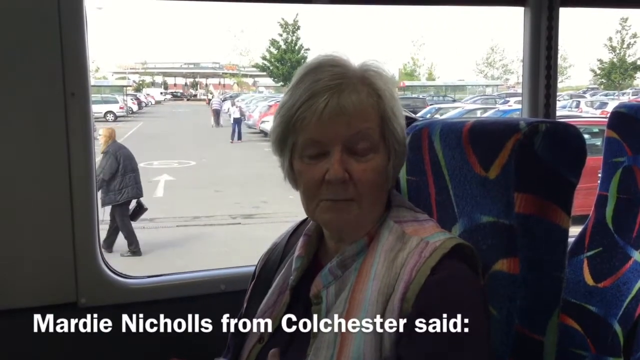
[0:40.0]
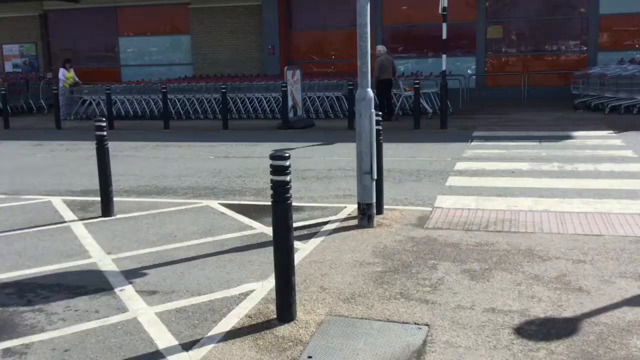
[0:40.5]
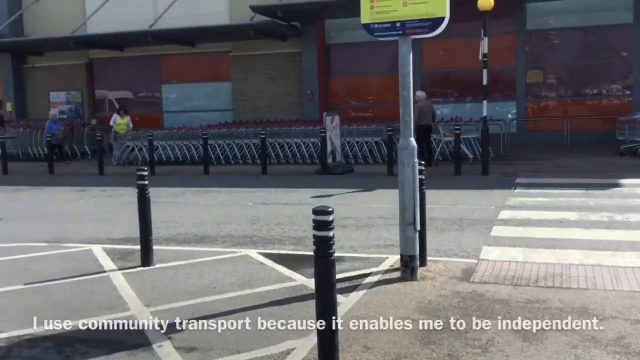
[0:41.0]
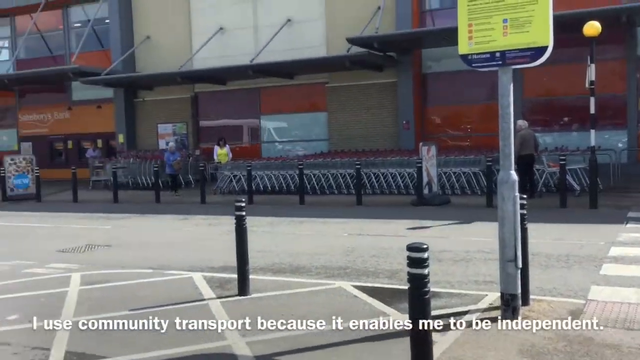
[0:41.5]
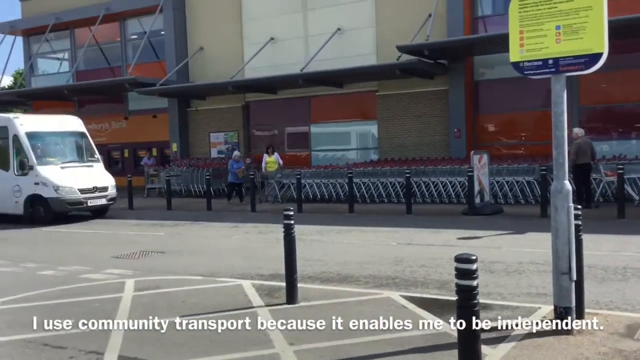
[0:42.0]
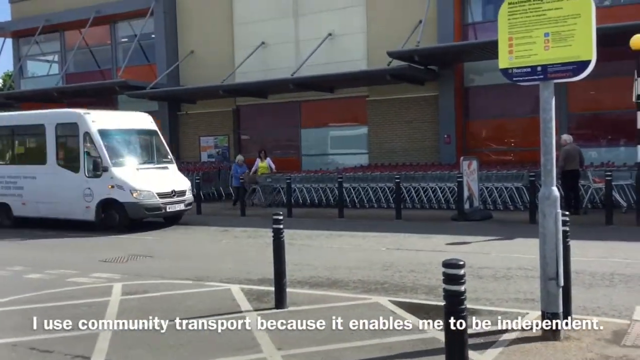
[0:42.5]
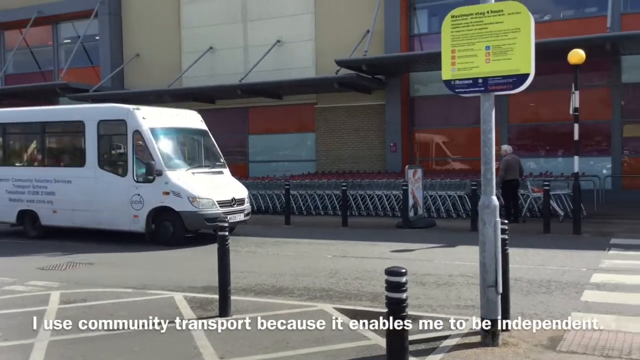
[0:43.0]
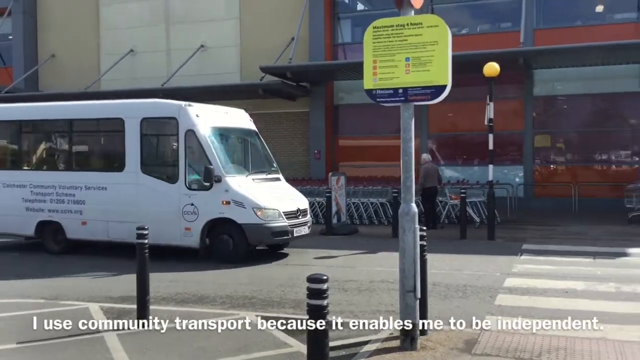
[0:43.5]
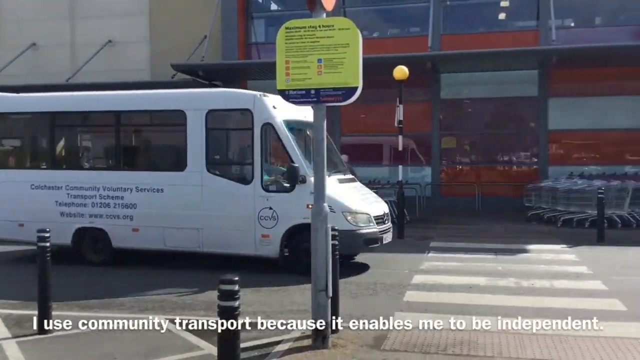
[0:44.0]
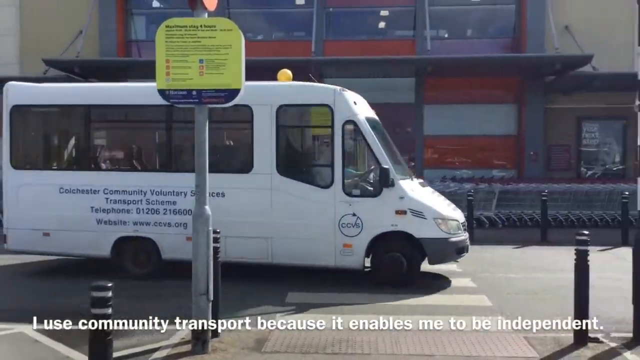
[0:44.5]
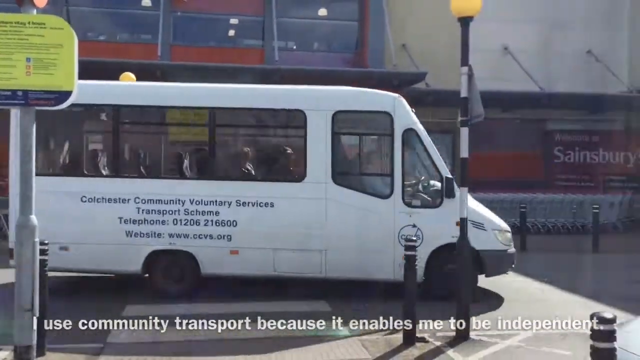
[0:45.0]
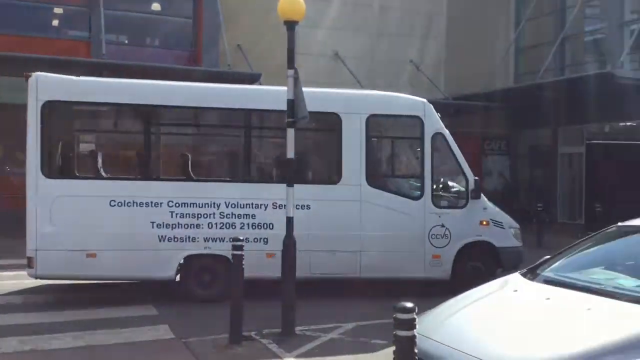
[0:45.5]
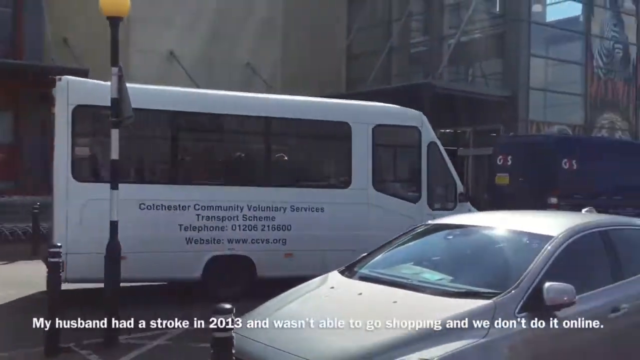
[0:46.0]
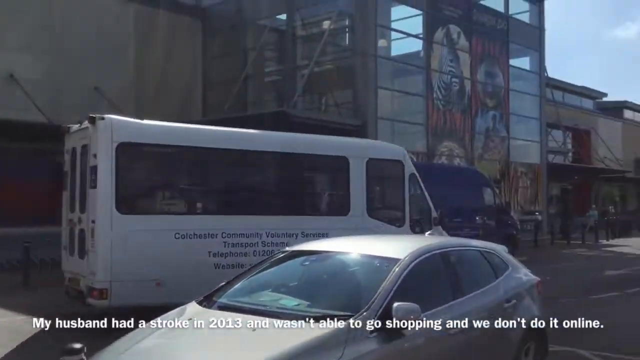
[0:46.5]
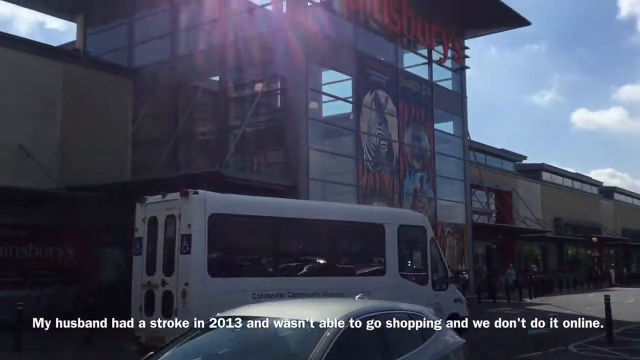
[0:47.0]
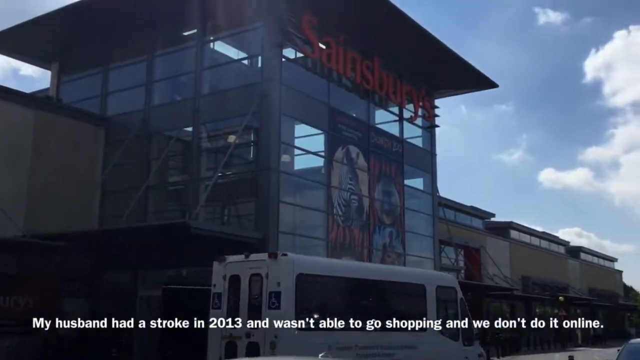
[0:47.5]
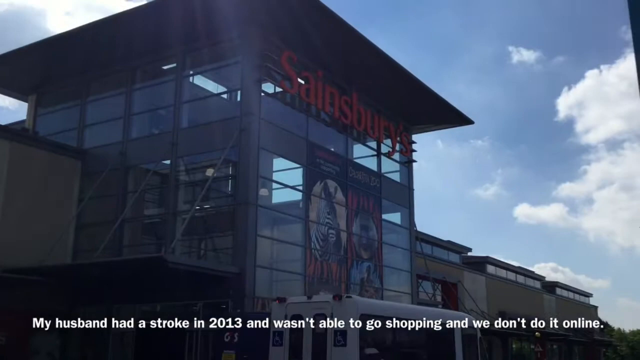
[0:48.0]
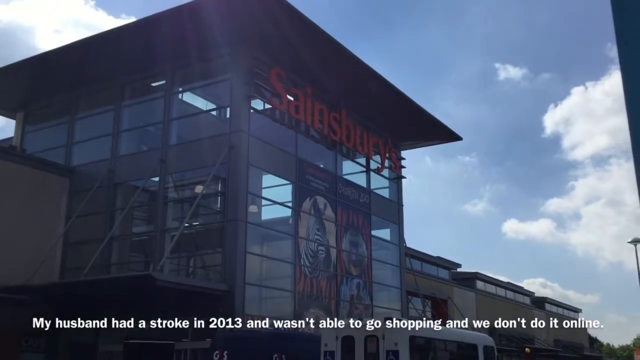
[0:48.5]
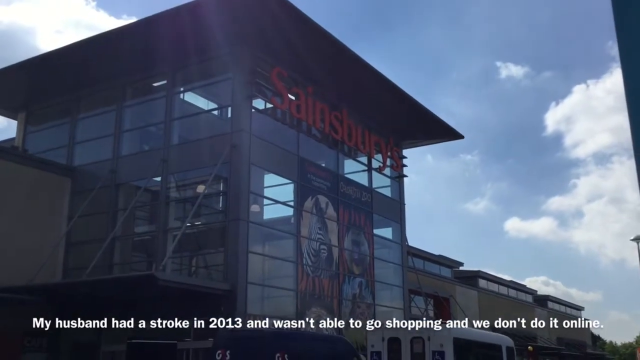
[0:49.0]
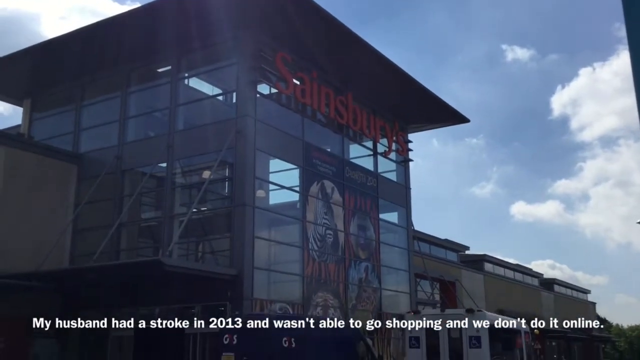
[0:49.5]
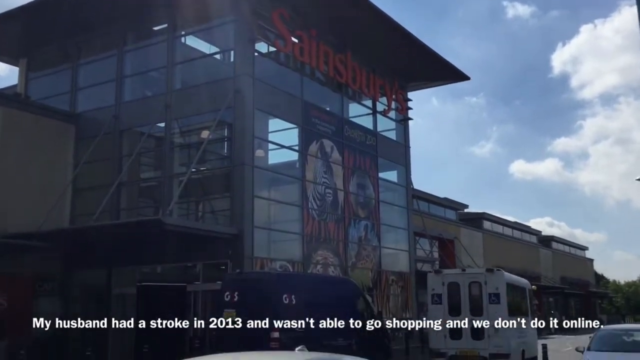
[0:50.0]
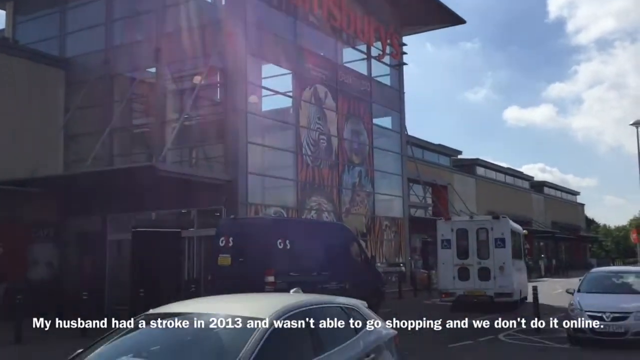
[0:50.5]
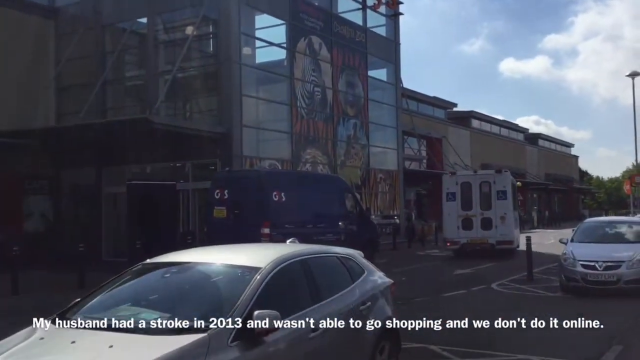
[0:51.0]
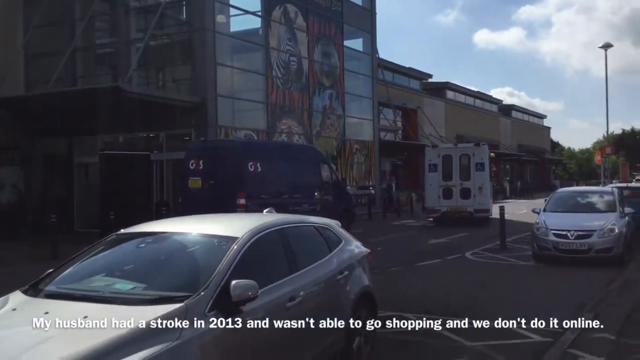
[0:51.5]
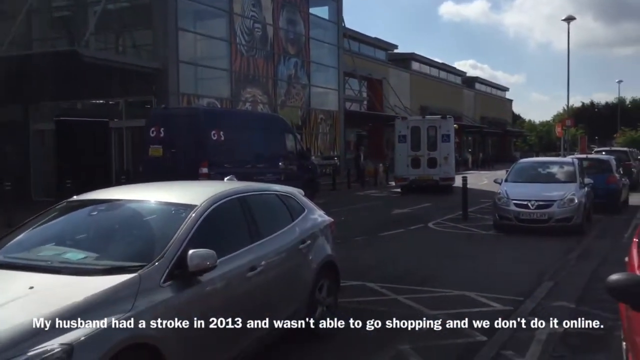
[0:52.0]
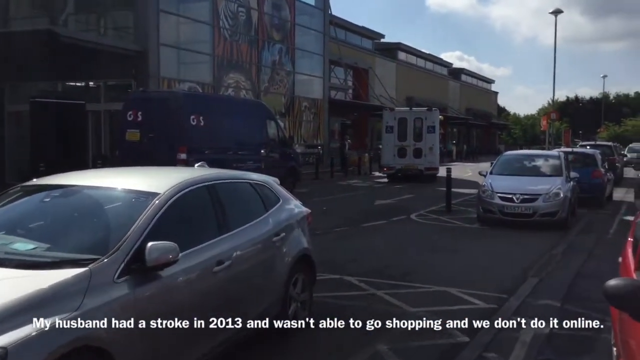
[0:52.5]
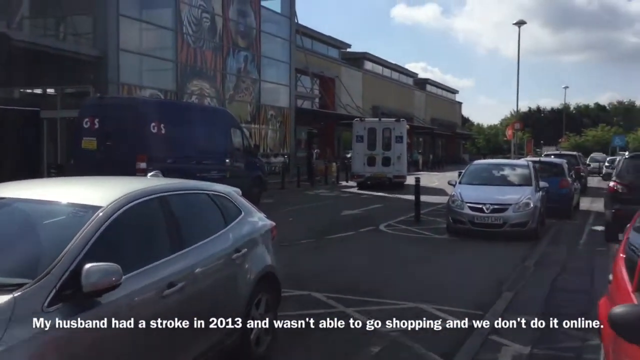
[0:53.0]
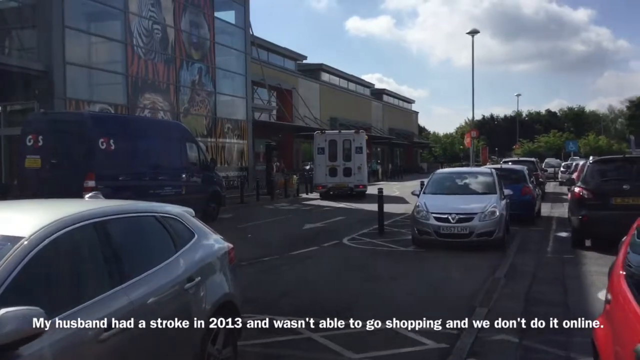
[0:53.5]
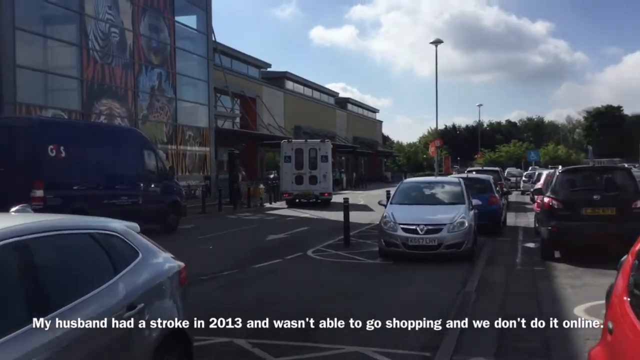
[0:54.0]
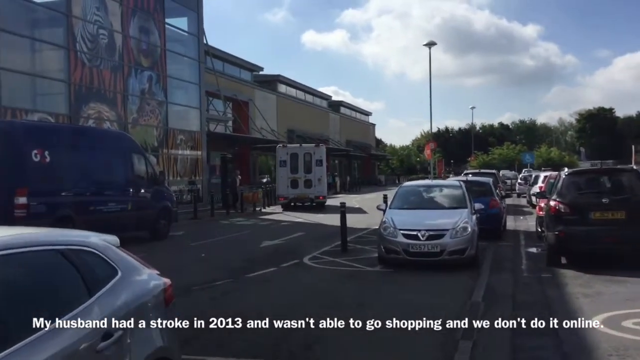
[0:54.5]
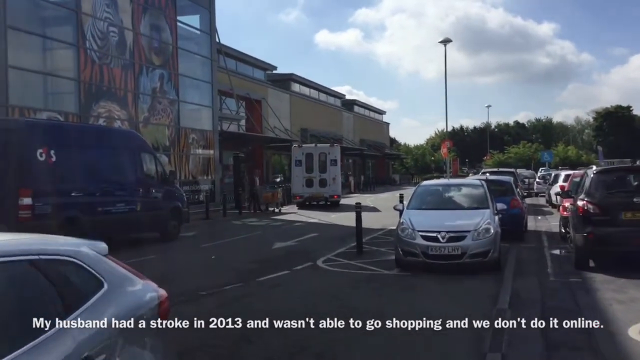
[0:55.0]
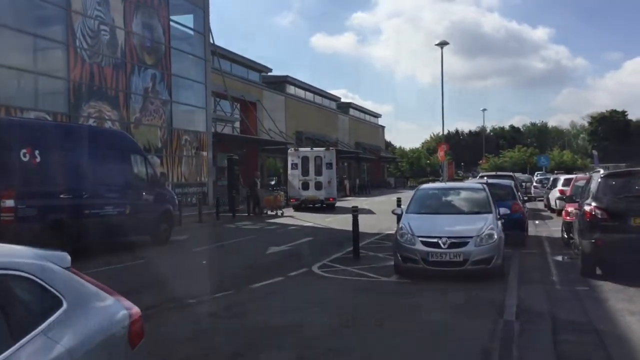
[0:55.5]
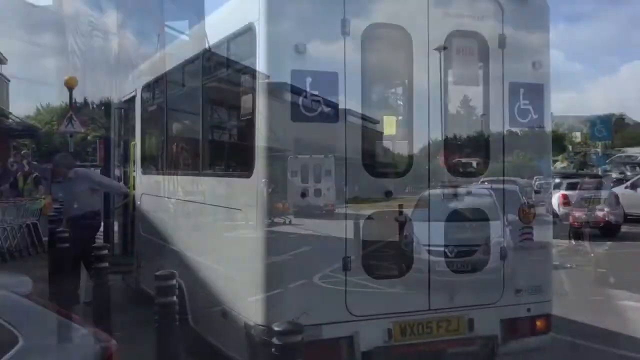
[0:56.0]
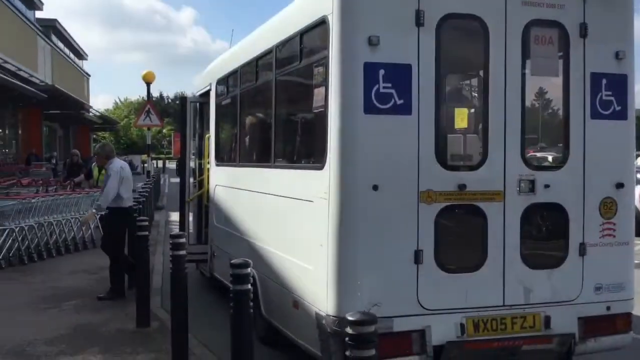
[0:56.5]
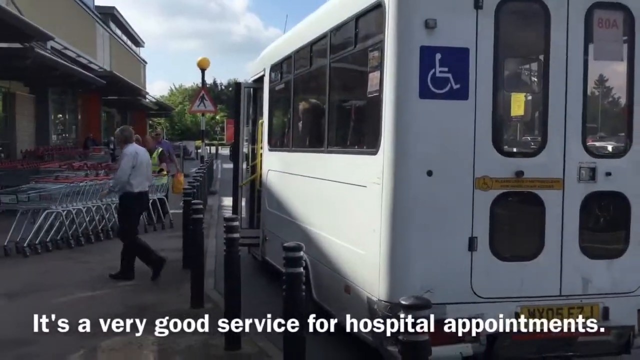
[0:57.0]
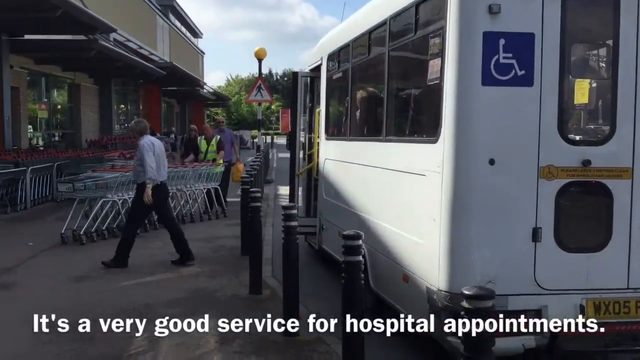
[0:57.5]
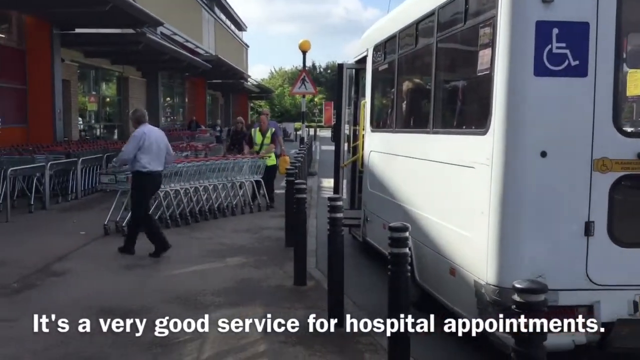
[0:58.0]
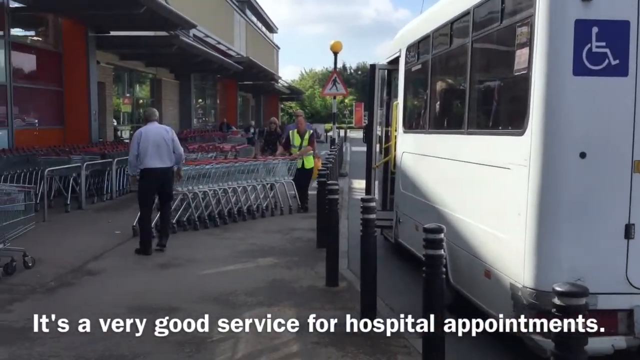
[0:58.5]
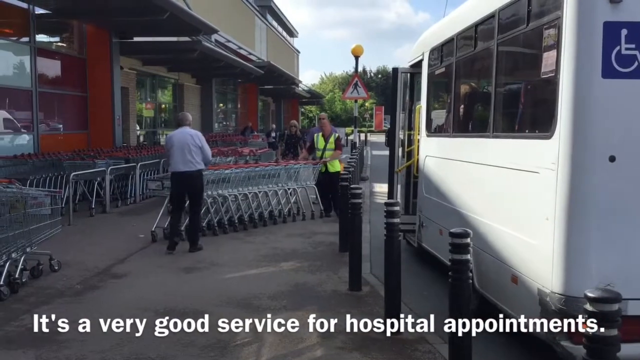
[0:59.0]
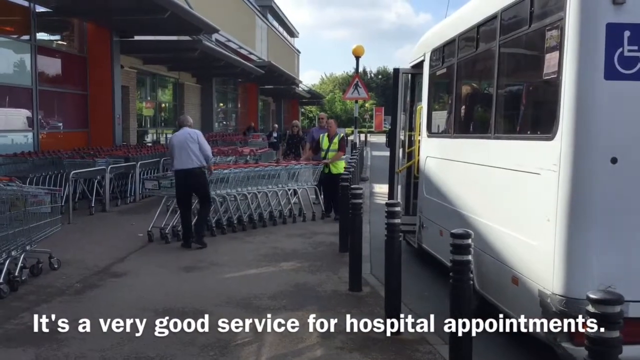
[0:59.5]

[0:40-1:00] An older woman with short grayish blonde hair is sitting on a bus seat next to the window. White text at the bottom of the video reads "Mardie Nicholls from Colchester said:". The scene then changes to the outside of a Sainsbury's grocery store, where the large white Colchester Community Voluntary Services bus pulls into the parking lot to drop off a man in front of the entrance. An older man in a white button-down shirt and black slacks gets off the bus and grabs a cart from a long line of carts that a person in a green safety vest is pushing back to the cart stand. A caption in white font at the bottom reads "I use community transport because it enables me to be independent My husband had a stroke in 2013 and wasn't able to go shopping and we don't do it online. It's a very good service for hospital appointments."